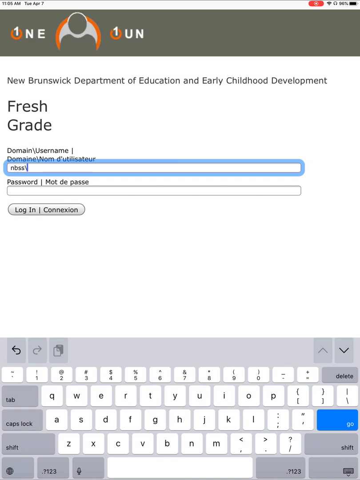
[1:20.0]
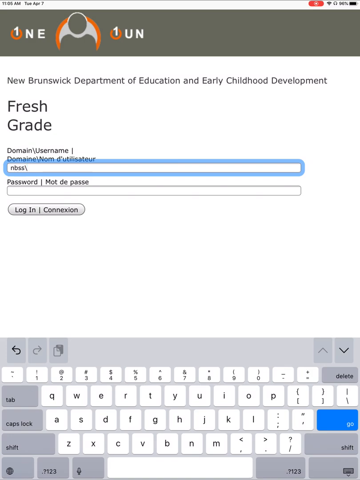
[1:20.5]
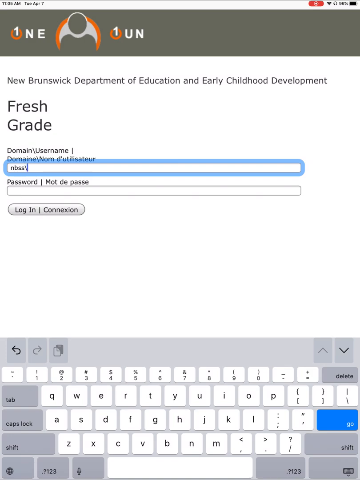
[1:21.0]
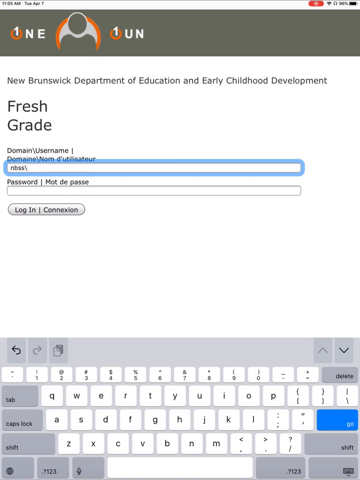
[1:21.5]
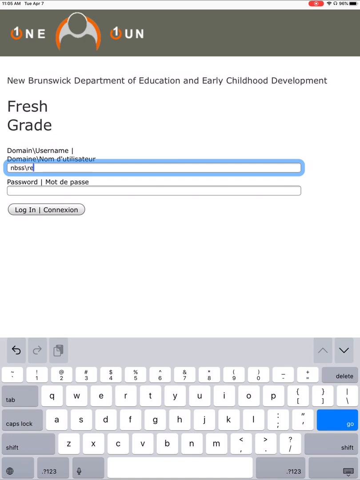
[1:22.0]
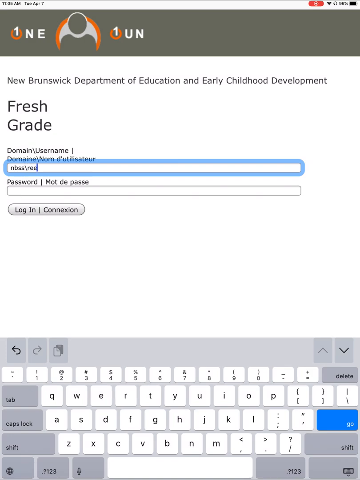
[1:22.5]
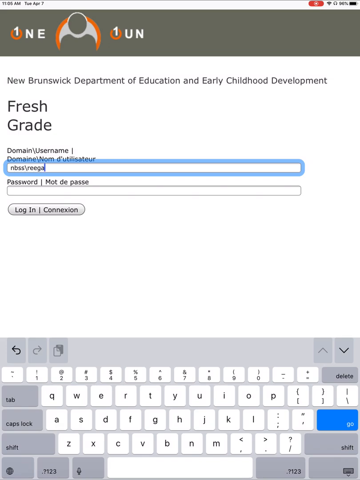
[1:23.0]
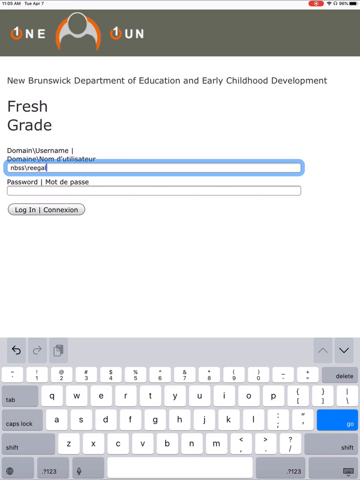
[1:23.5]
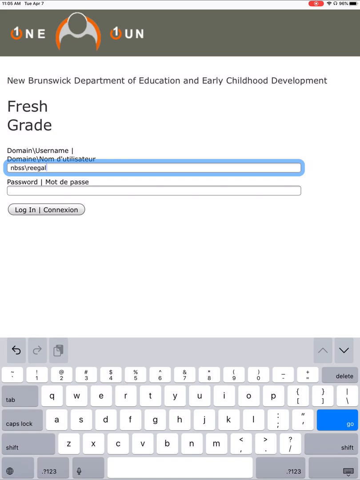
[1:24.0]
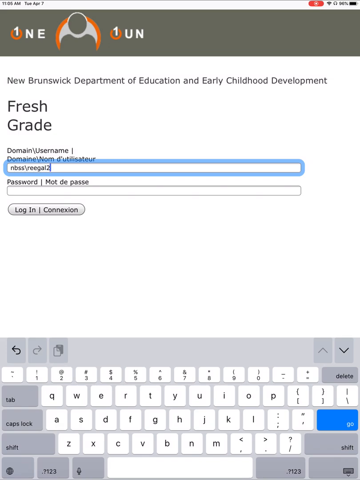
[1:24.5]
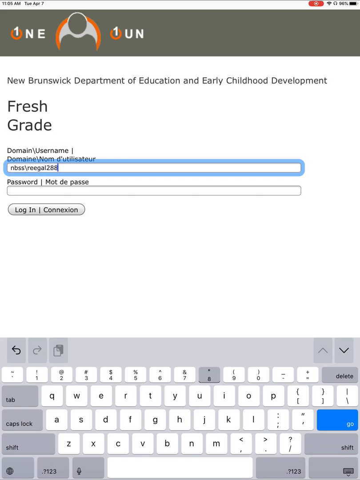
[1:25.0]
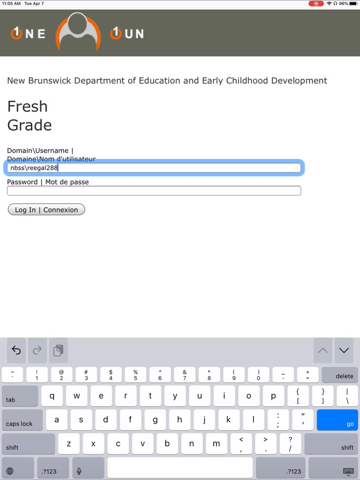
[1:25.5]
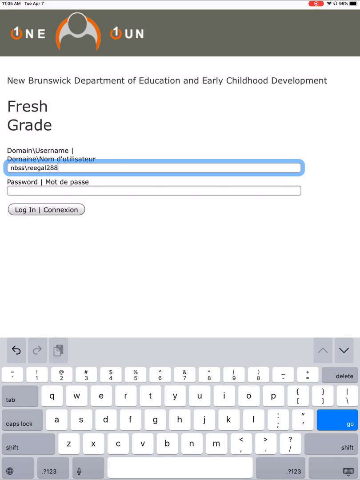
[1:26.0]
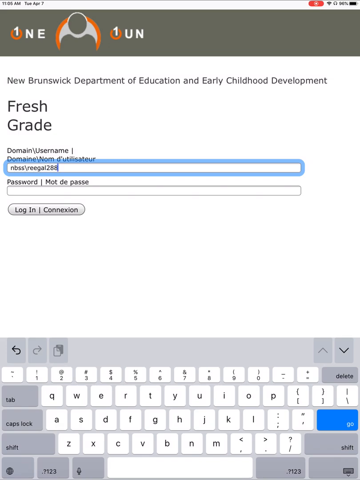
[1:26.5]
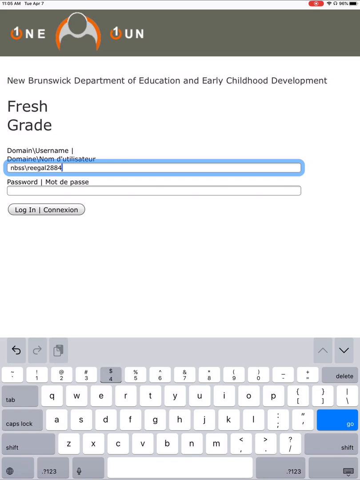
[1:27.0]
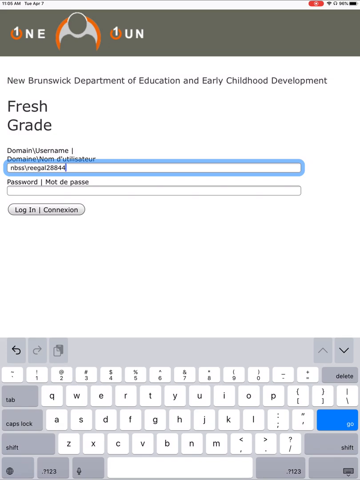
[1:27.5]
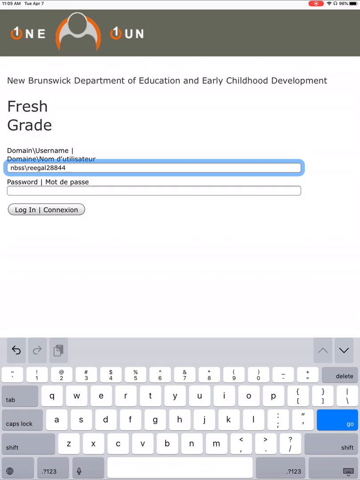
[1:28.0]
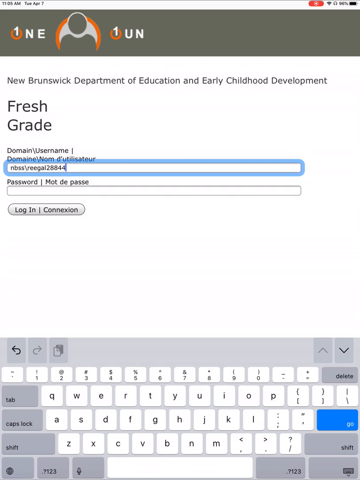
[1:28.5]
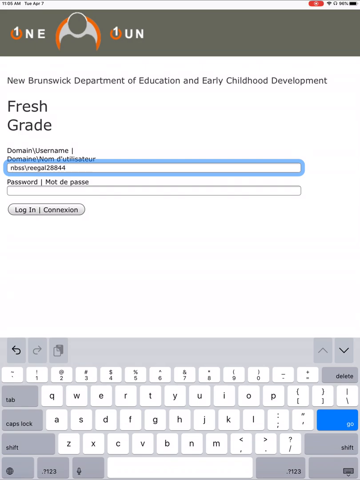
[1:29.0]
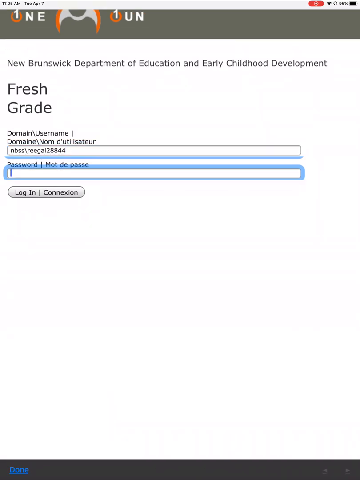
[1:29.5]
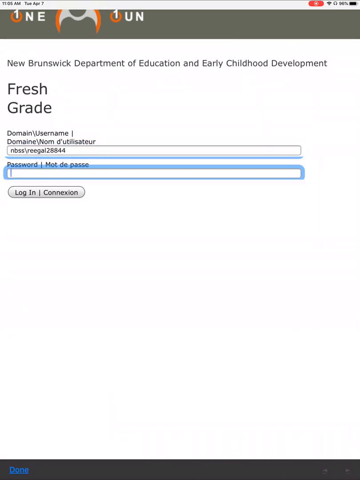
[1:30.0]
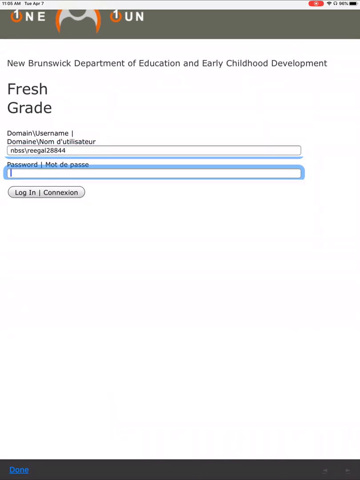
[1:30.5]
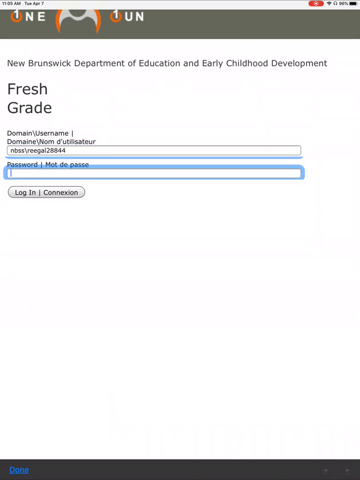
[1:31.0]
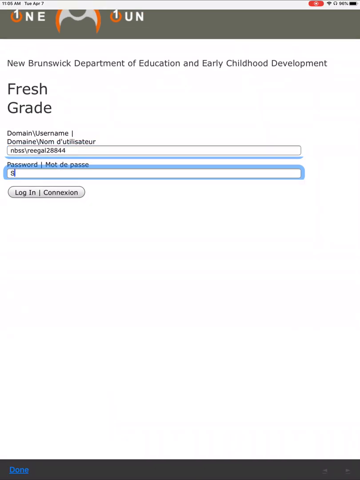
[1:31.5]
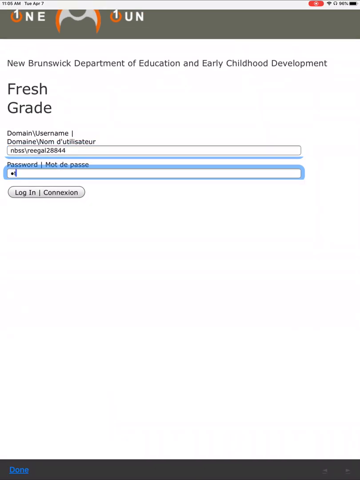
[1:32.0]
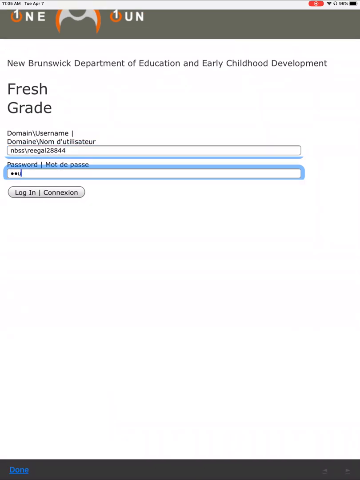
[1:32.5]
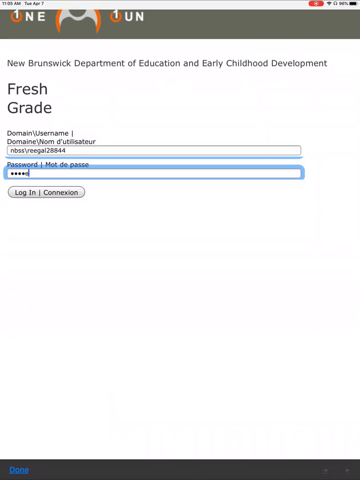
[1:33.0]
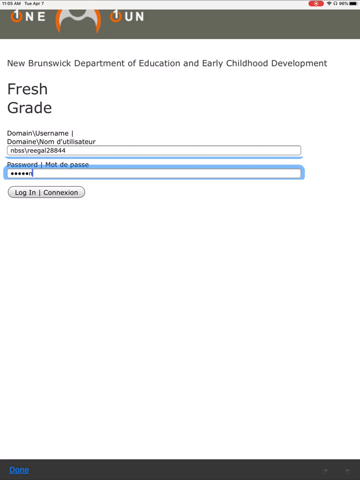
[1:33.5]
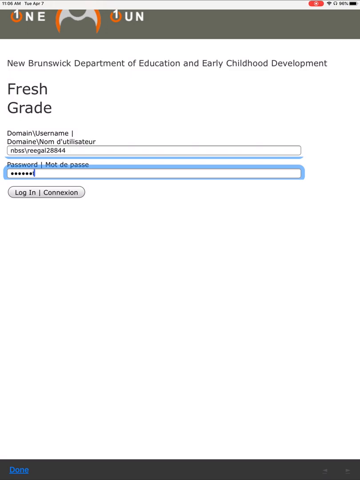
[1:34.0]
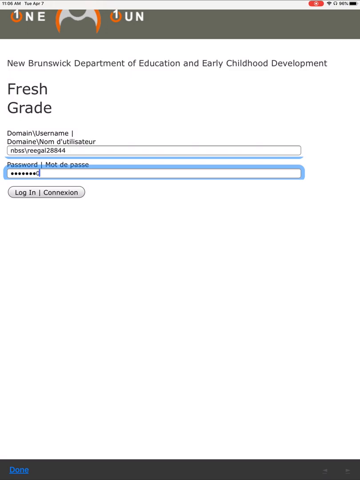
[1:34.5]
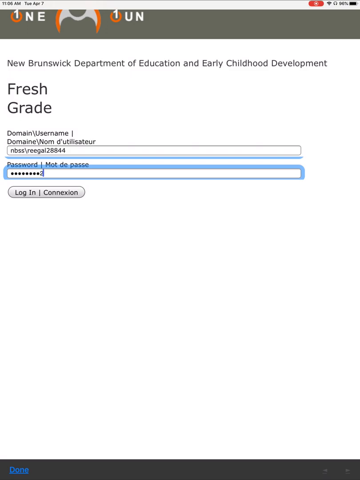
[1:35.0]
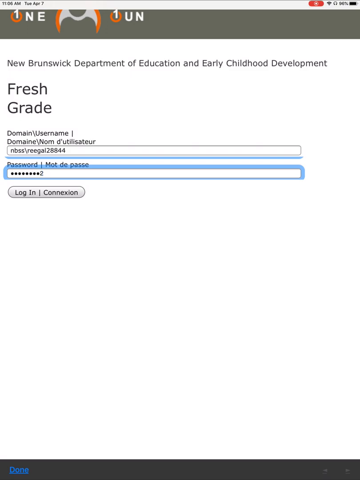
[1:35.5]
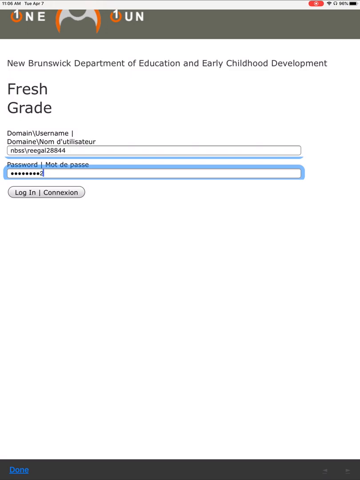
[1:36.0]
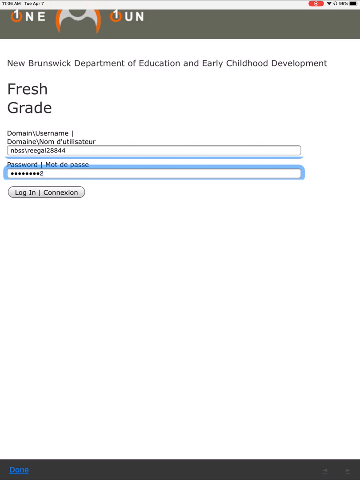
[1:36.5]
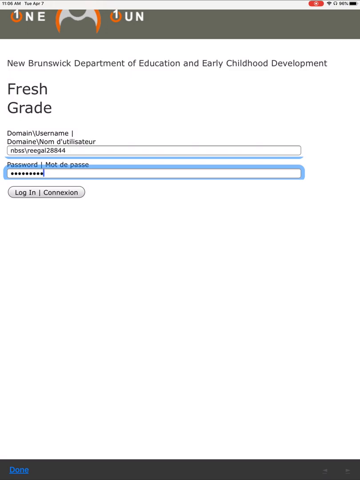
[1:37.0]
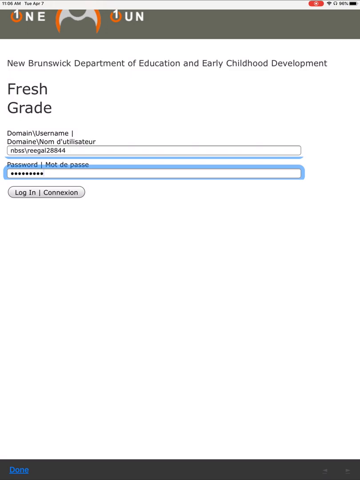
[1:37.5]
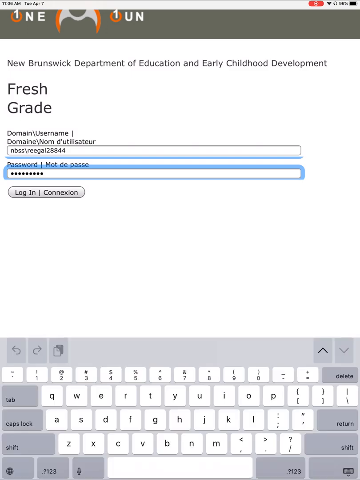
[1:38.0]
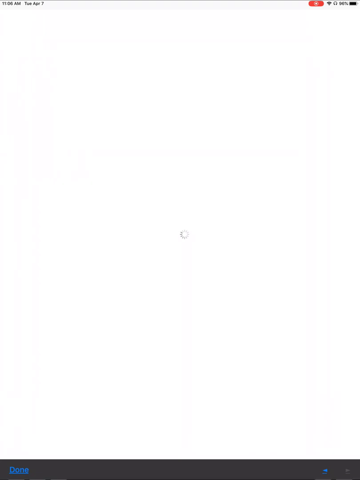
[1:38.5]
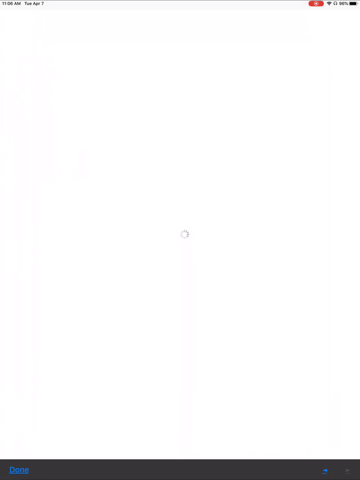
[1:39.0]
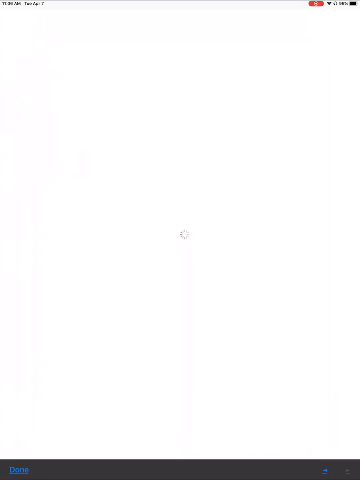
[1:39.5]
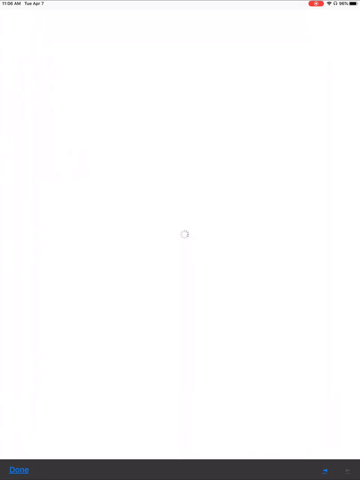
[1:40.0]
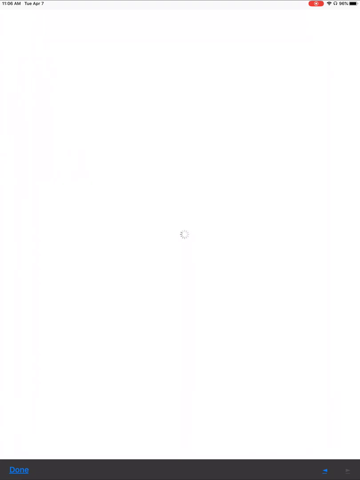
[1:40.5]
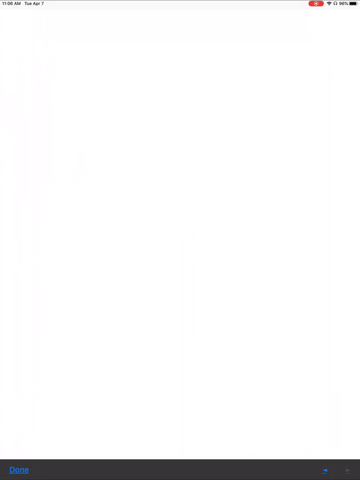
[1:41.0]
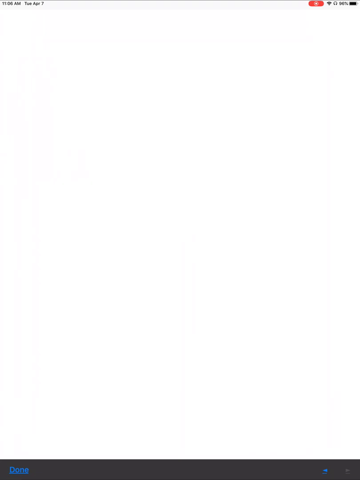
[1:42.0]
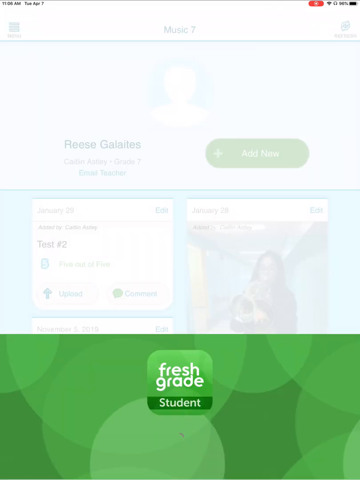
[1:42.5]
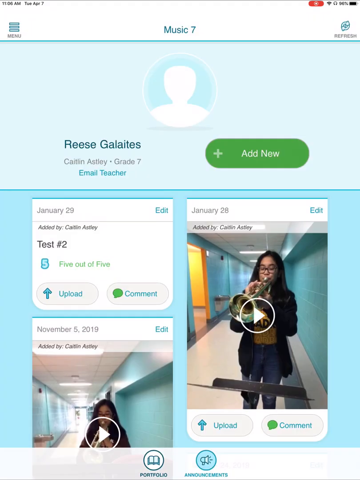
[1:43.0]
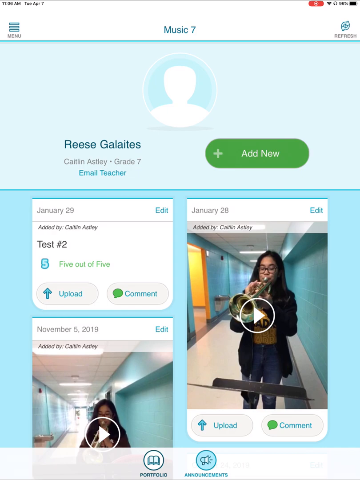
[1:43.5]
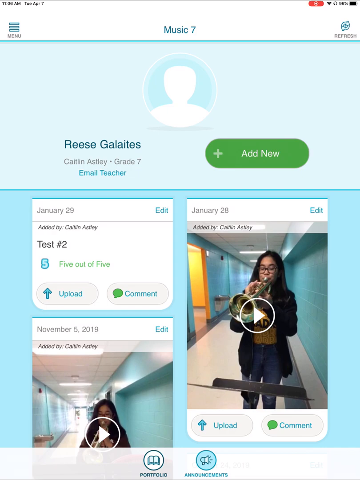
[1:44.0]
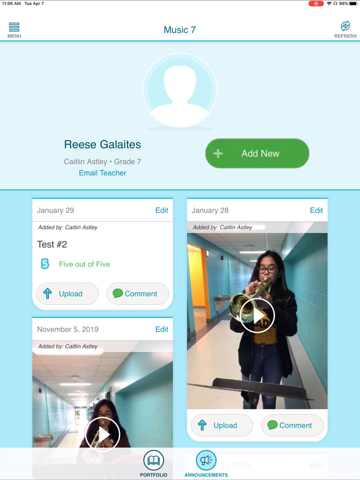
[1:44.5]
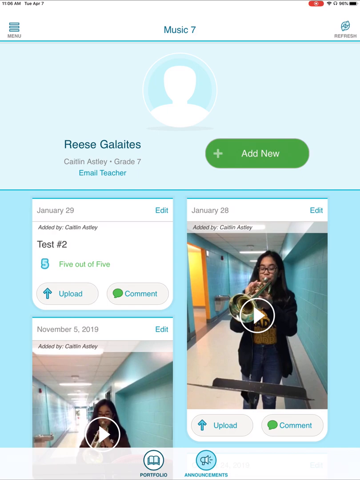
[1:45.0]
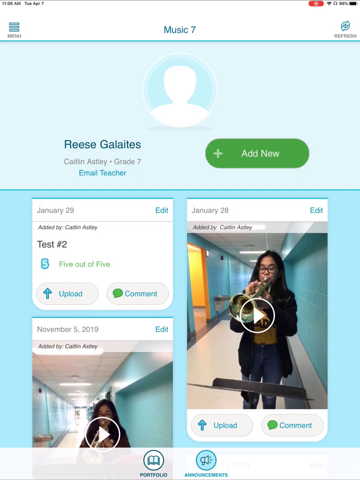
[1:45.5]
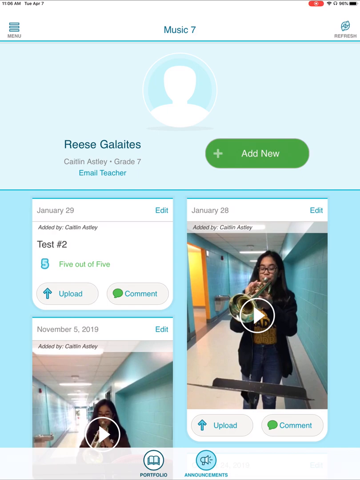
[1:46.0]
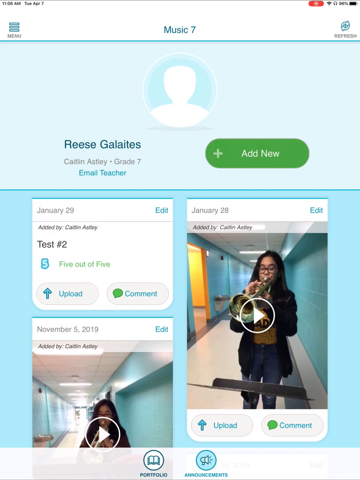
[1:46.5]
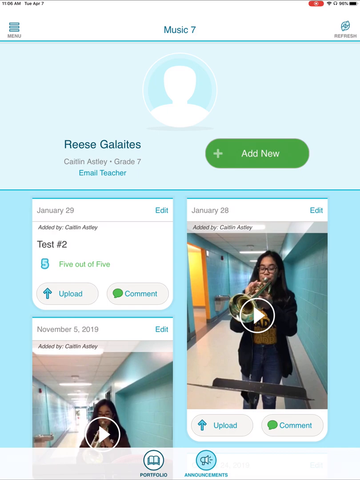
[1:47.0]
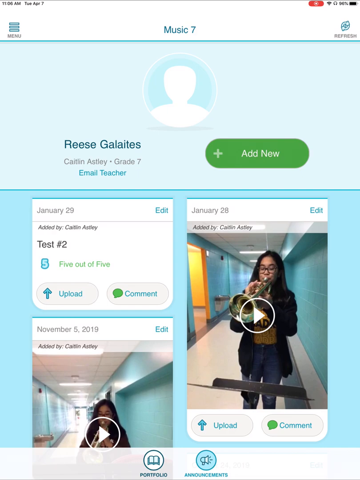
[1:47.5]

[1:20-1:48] The user continues typing the domain in the top box for the username, finishes, and clicks on the password box below; the blue outline moves from the domain/username box to the password box, a simple blue outline around the white box. The user types a password and clicks the gray login button below. The screen goes white for a second, then the FreshGrade loading screen with the green background and green shaded circles design appears for a split second. After it finishes loading, the green page falls down to the bottom of the screen, revealing the logged-in page with the profile. At the top of the screen it shows "Music 7 Reese Gallaites", a teacher profile, with a green "add new" button to the right. Below the profile information are uploads: a feed image of a girl playing the trumpet, another post that says "test number two", and a cut-off video of the girl playing the trumpet below the test number two post. Each post has symbols below it for commenting, uploading, and editing. Three posts are visible in total, with the main trumpet video on the right and the two other posts on the left.